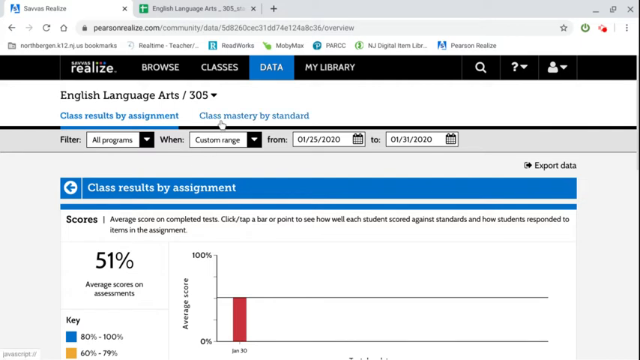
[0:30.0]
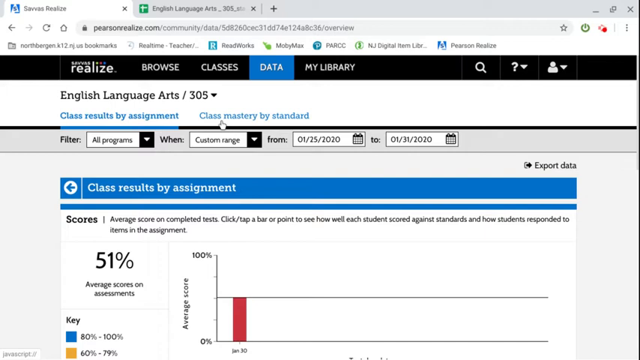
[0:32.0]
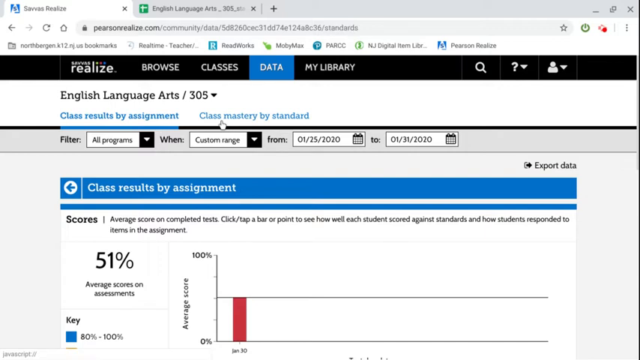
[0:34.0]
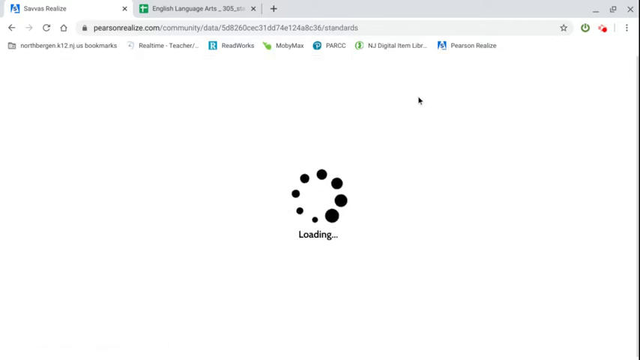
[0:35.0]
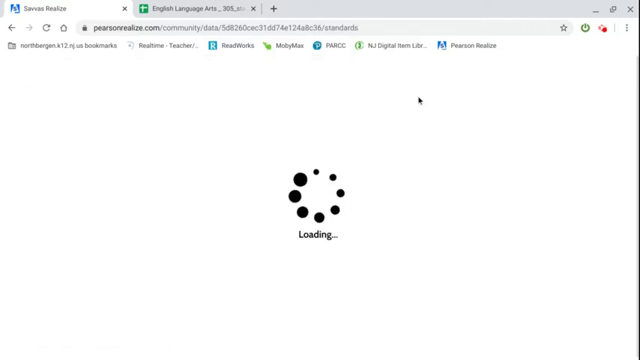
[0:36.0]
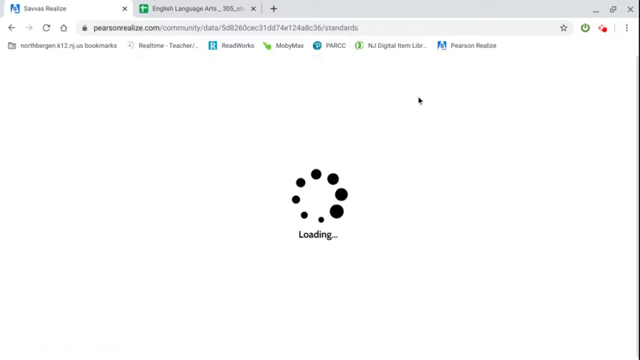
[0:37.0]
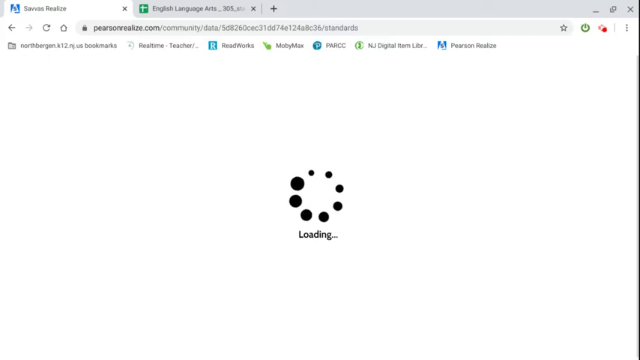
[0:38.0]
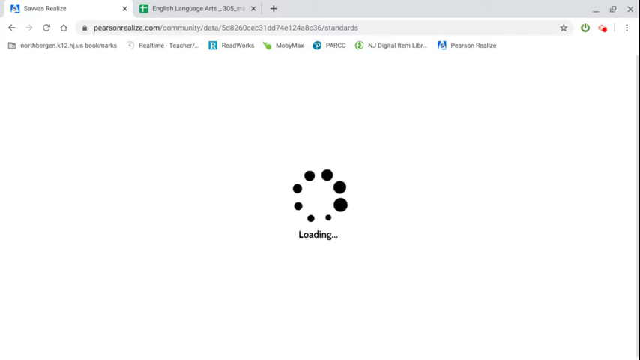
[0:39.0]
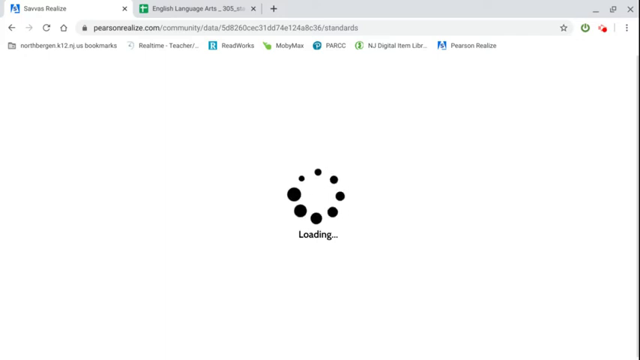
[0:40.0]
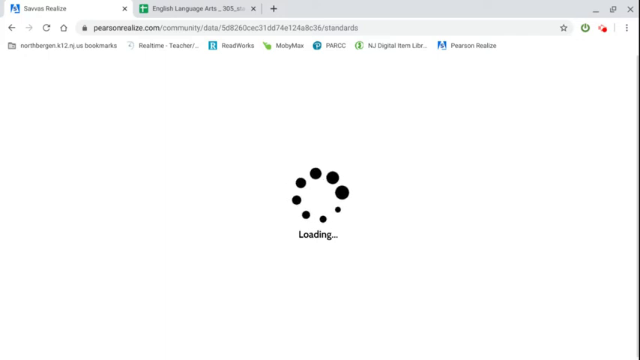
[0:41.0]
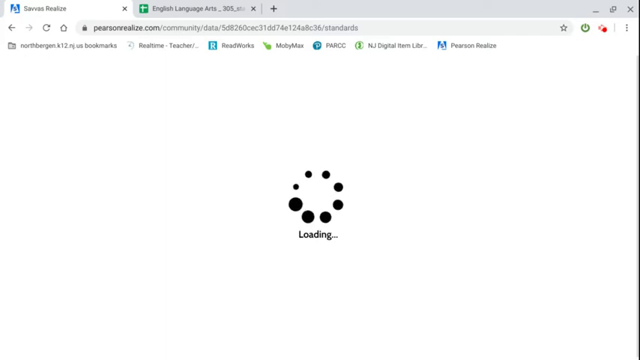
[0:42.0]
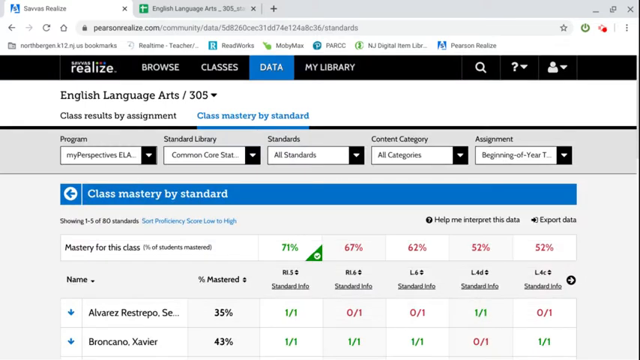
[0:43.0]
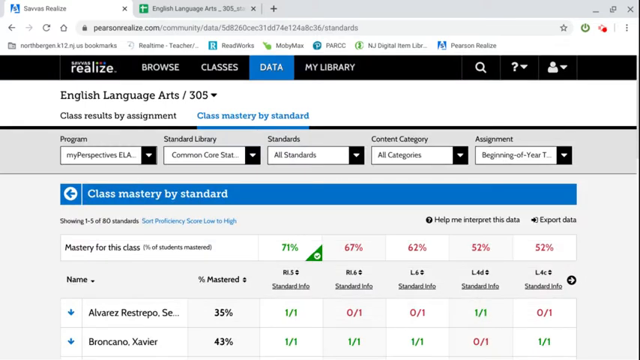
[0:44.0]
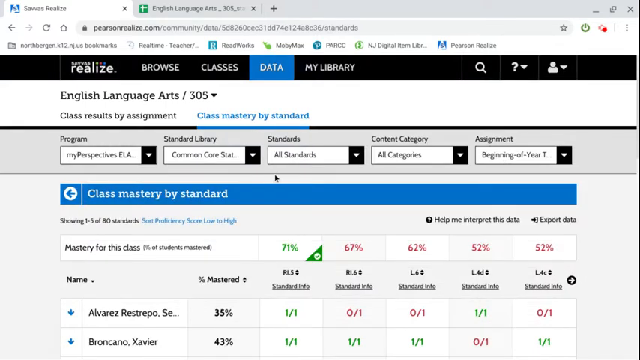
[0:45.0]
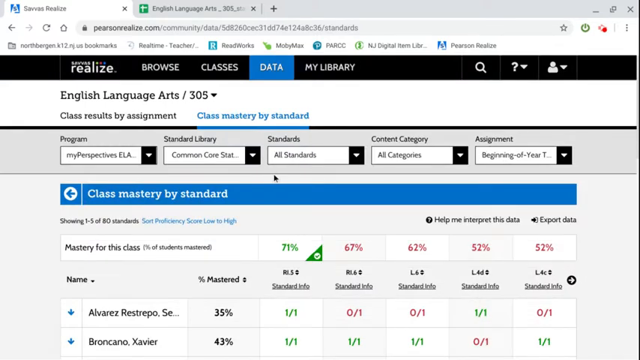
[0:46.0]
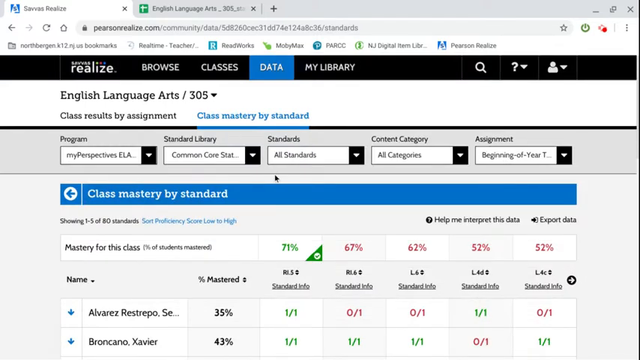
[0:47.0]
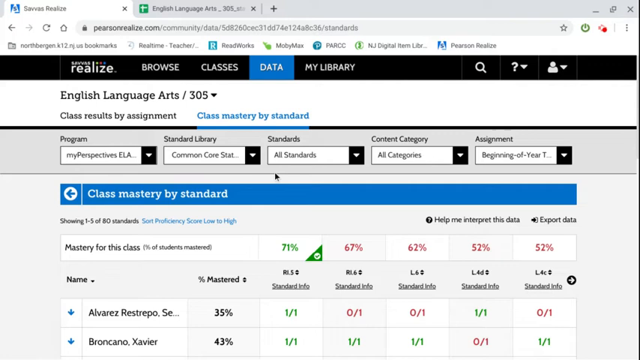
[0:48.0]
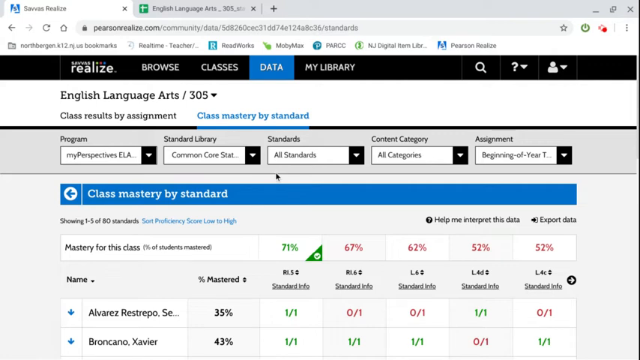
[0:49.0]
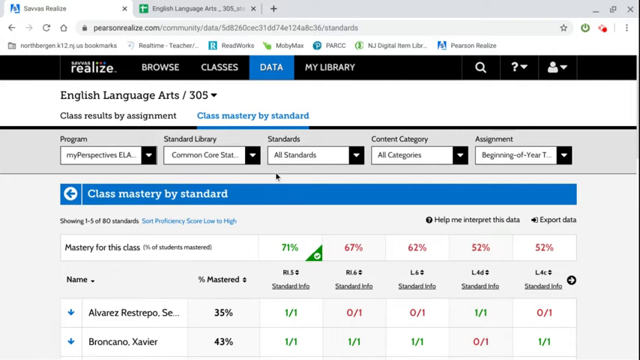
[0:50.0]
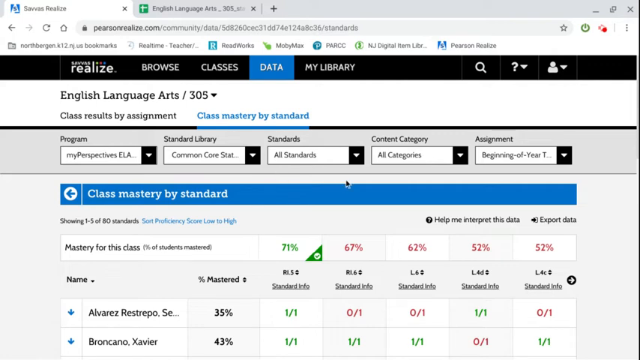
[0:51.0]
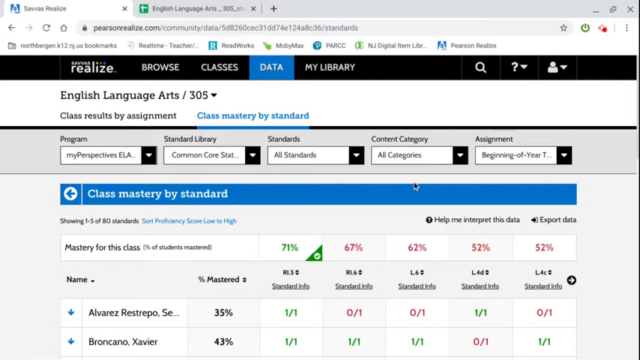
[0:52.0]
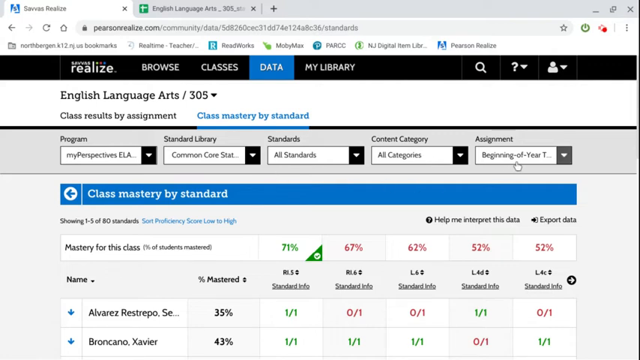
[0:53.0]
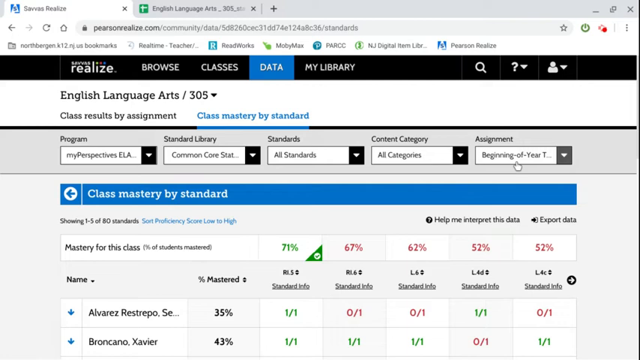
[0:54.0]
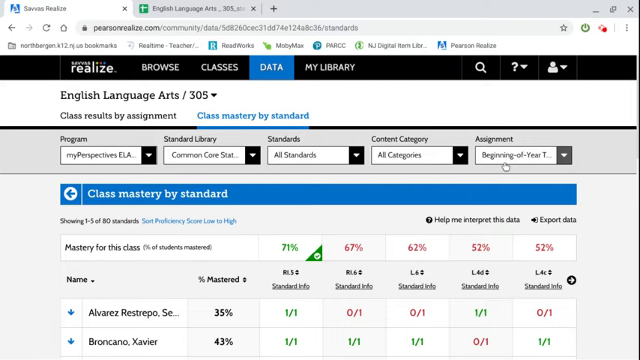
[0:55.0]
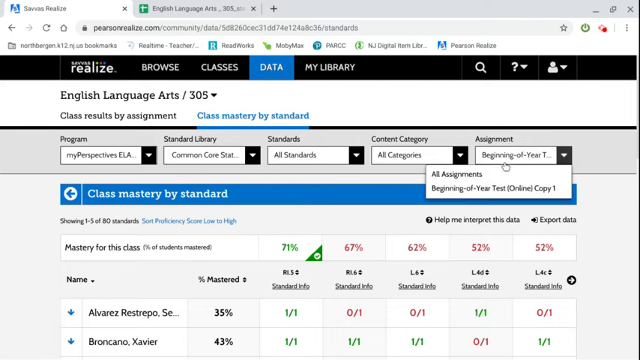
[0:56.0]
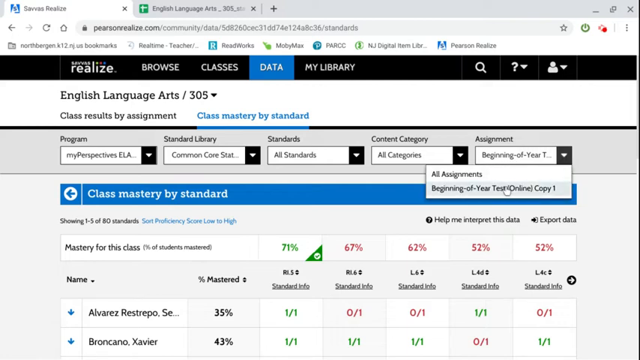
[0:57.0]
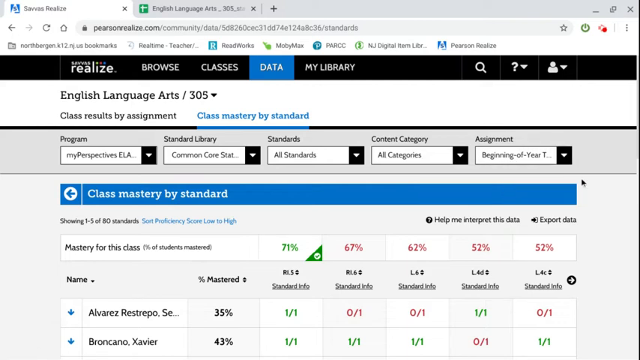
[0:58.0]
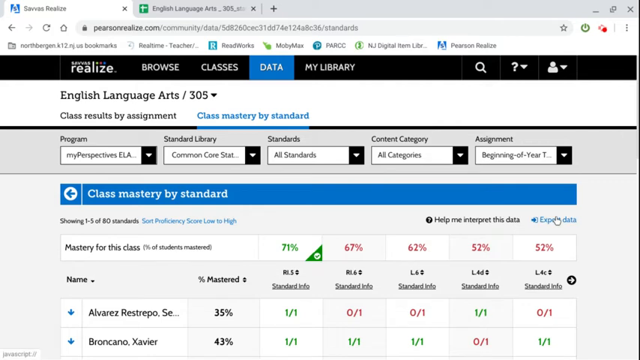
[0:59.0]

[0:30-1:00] The English Language Arts 305 page shows "Class Results by Assignment" with some scores, including an average score on the assignments of 51%, and a bar graph with only one bar. Another selection appears to be made, a page loads, and it goes to "Class Mastery by Standard", which shows mastery across the whole class and then student names at the bottom, including Alvarez Restrepo and Xavier Brancano. The user appears to be selecting a filter for the data, but what gets filtered is not shown.